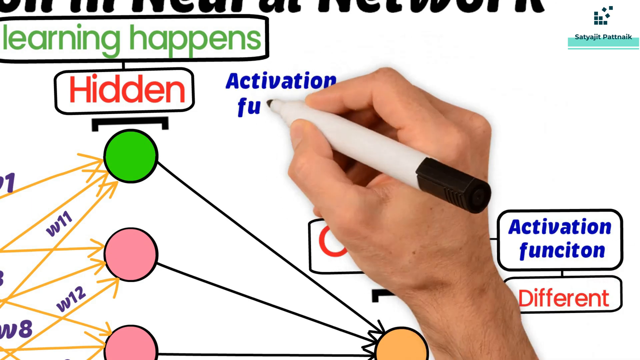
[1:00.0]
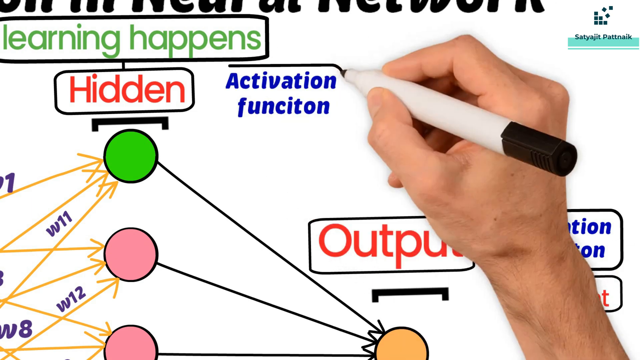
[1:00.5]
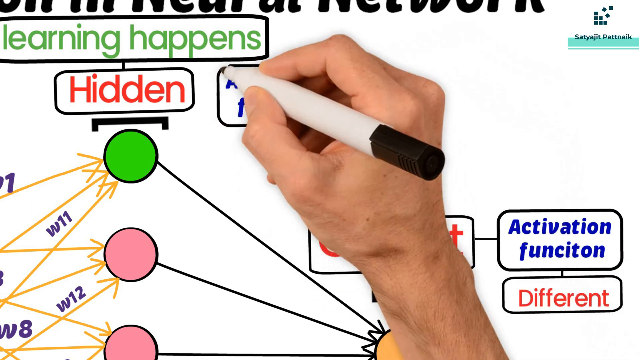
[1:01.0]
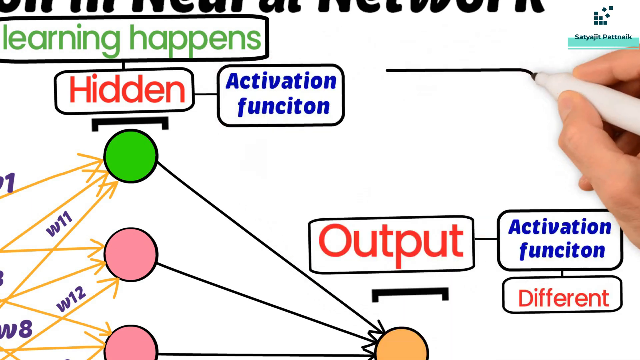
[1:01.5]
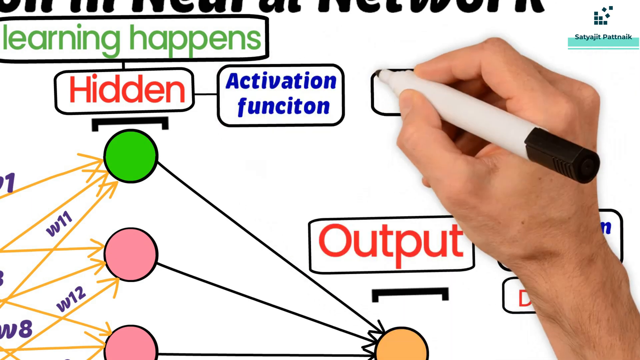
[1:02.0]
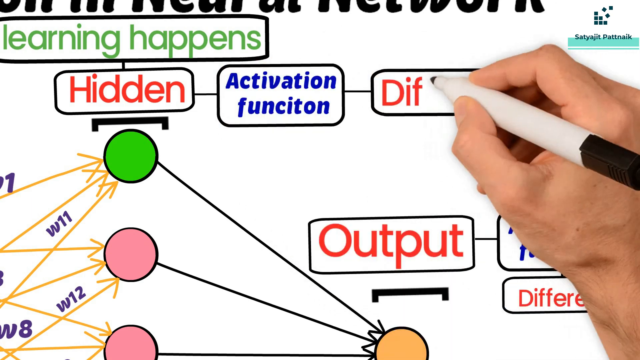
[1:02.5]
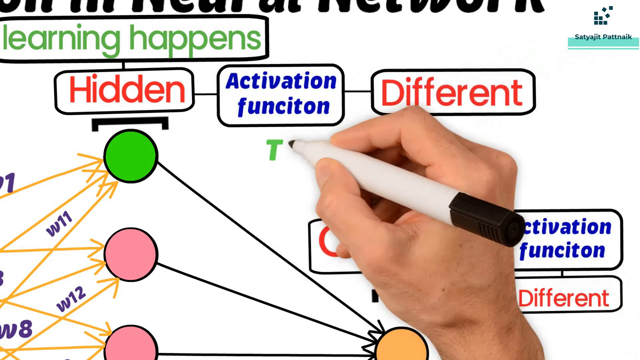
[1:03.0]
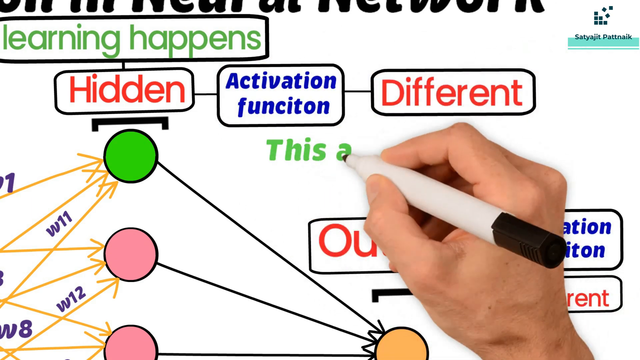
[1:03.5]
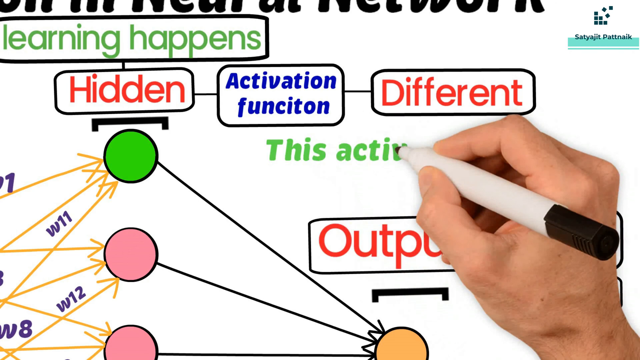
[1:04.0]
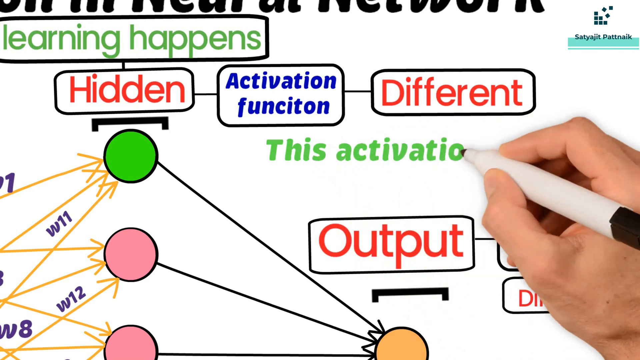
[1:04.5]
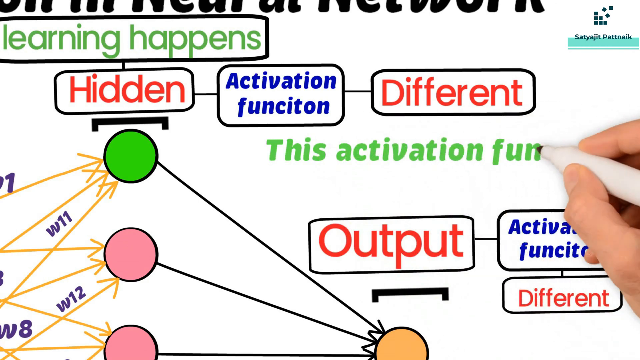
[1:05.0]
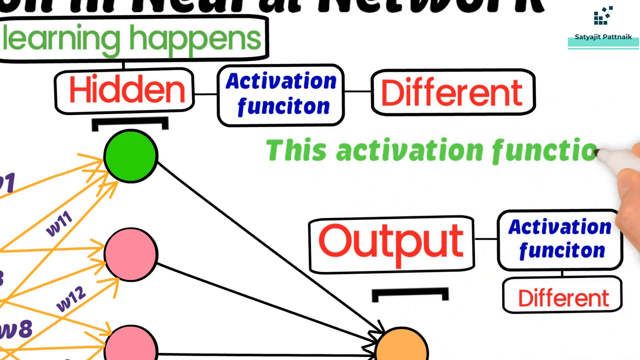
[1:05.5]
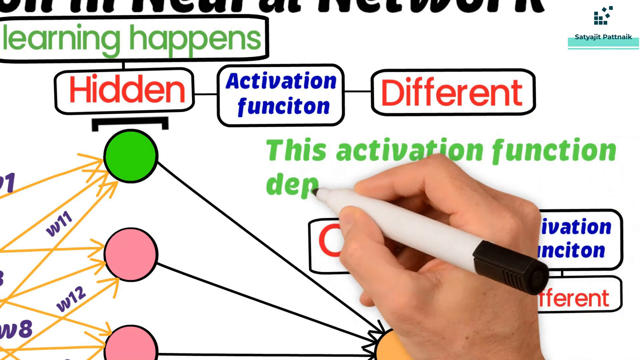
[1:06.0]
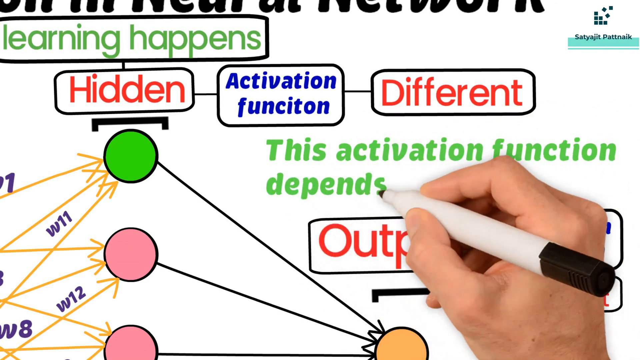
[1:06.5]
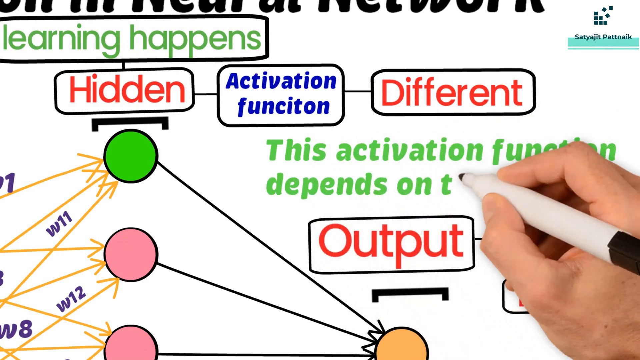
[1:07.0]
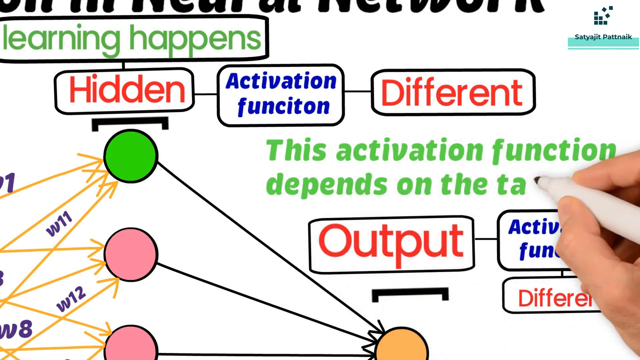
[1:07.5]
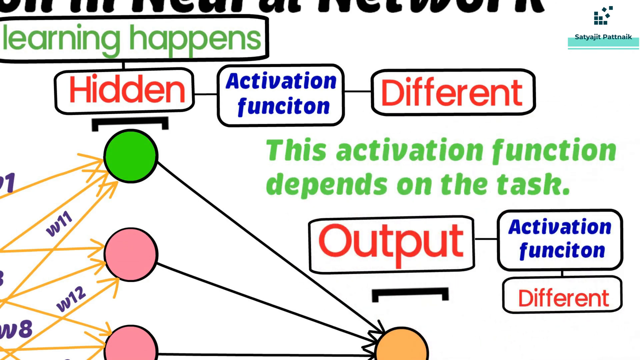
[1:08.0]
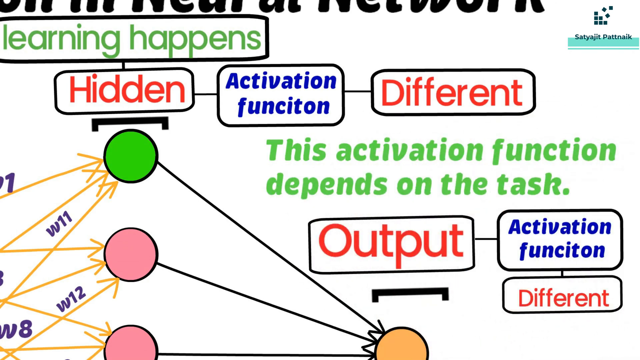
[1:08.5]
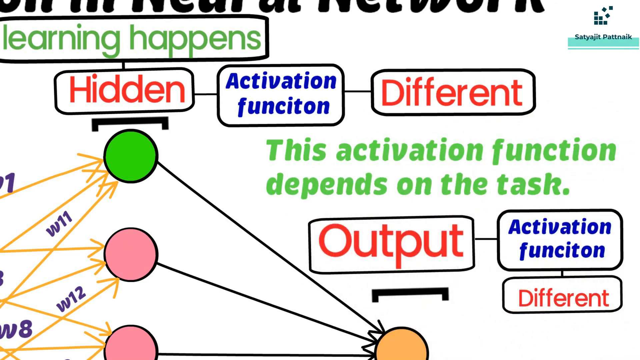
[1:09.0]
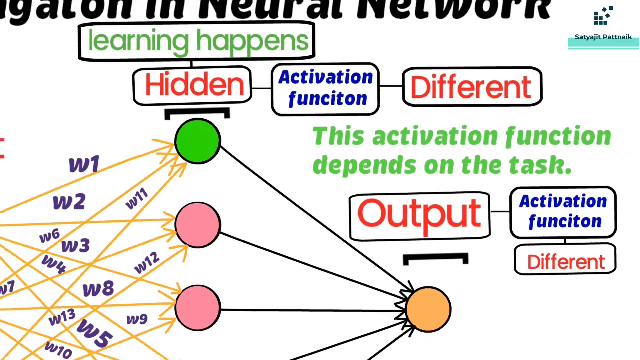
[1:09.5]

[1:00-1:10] More headings are added, some of them written in green, including one about different activation functions, along with an explanation reading "activation function depends on the task." The video zooms in to focus on part of these definitions, and after the green heading is written it zooms out to show the whole picture. The slogan or emblem remains in the top right.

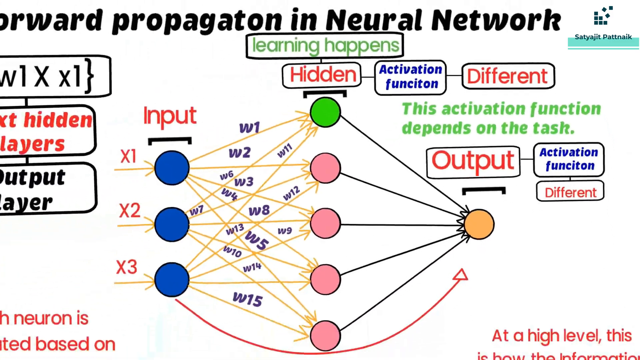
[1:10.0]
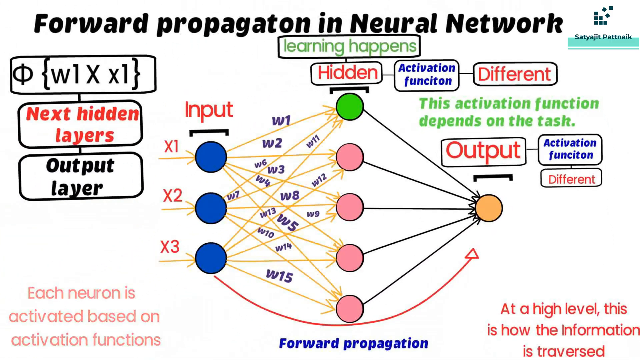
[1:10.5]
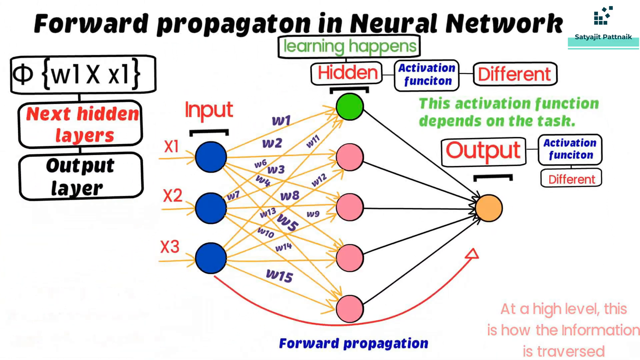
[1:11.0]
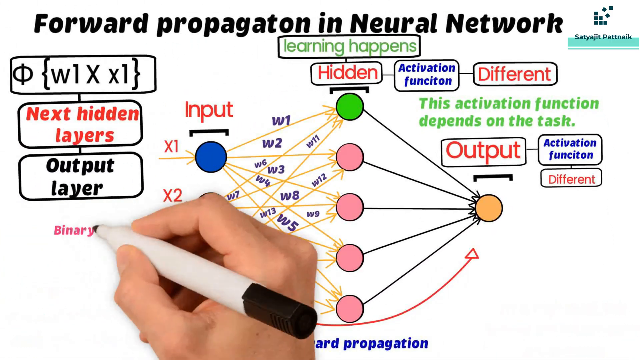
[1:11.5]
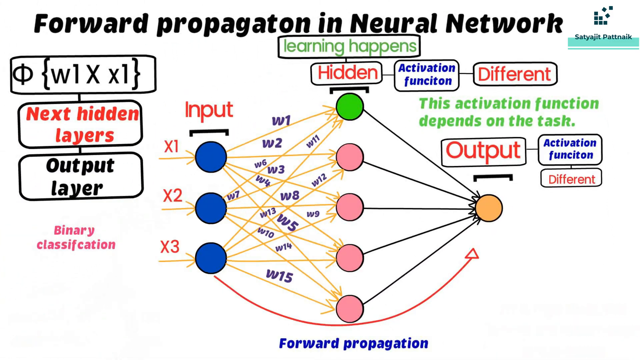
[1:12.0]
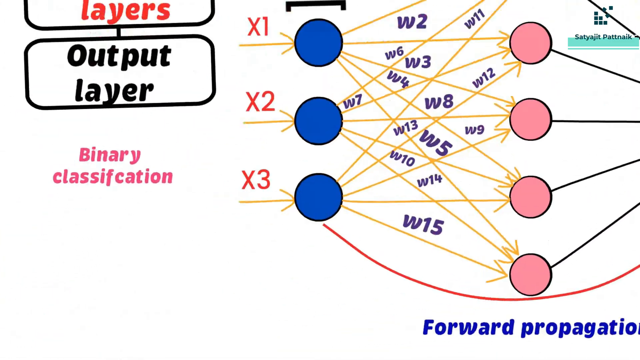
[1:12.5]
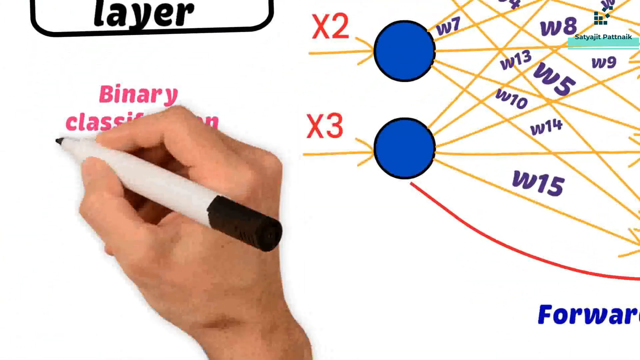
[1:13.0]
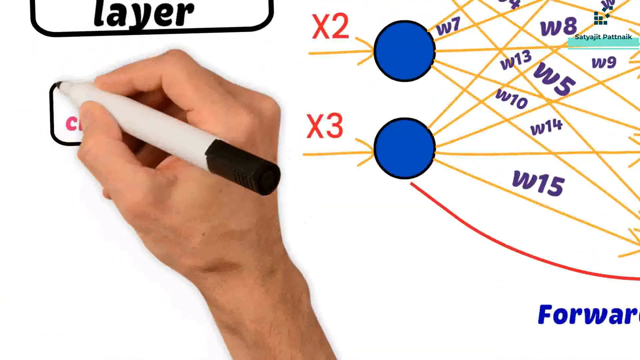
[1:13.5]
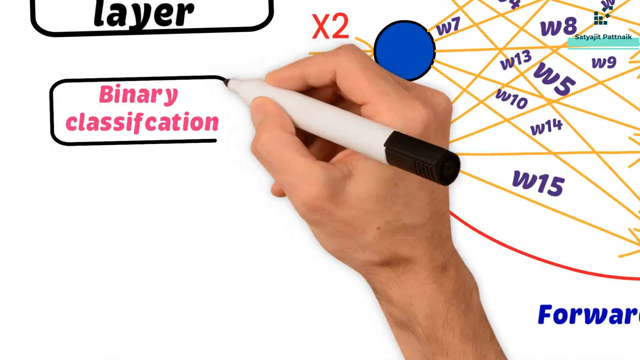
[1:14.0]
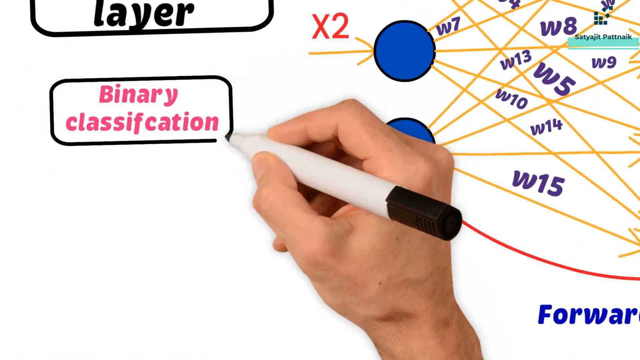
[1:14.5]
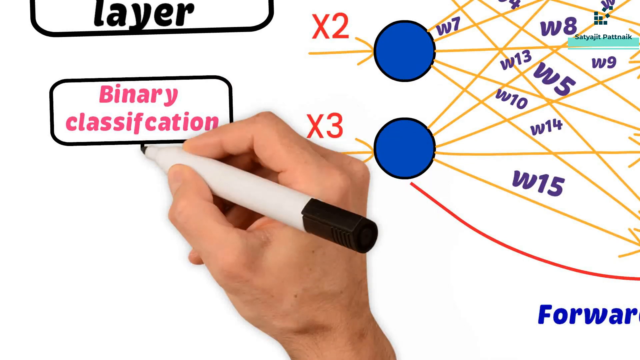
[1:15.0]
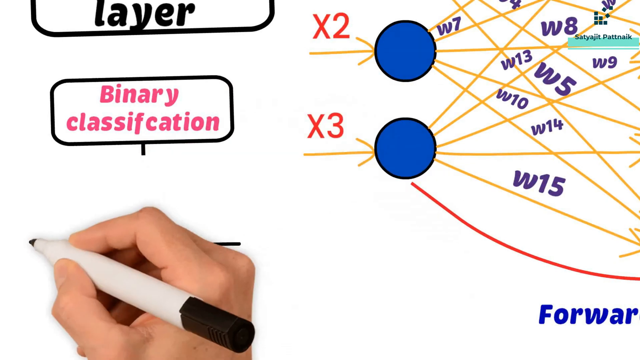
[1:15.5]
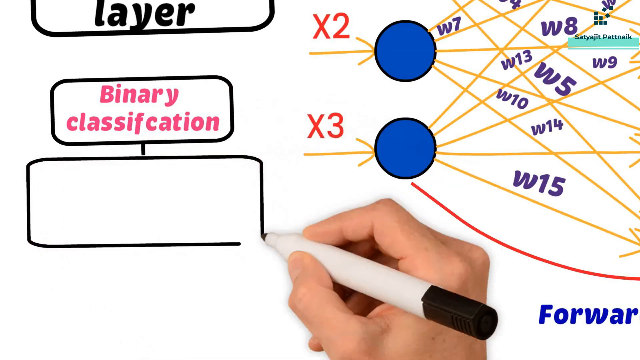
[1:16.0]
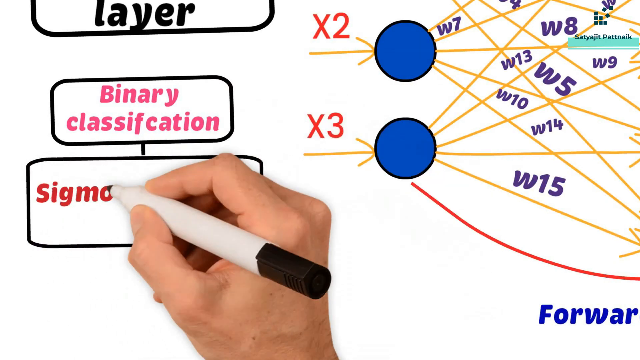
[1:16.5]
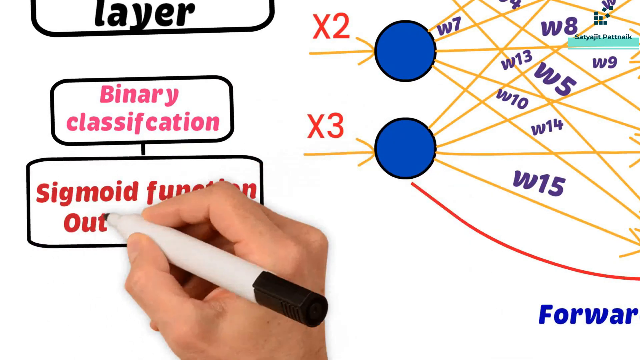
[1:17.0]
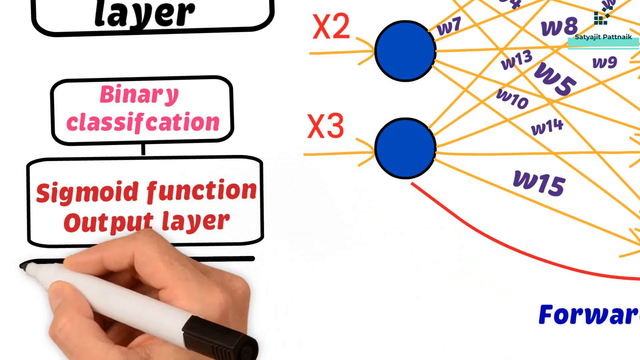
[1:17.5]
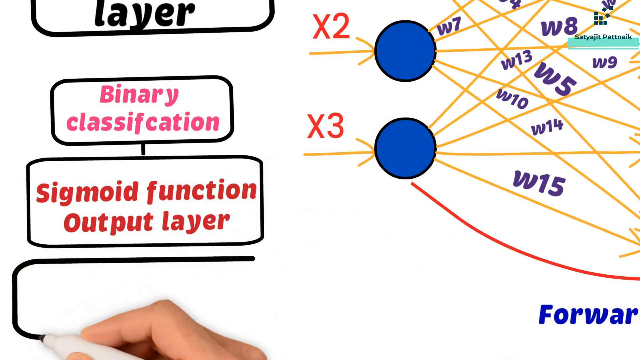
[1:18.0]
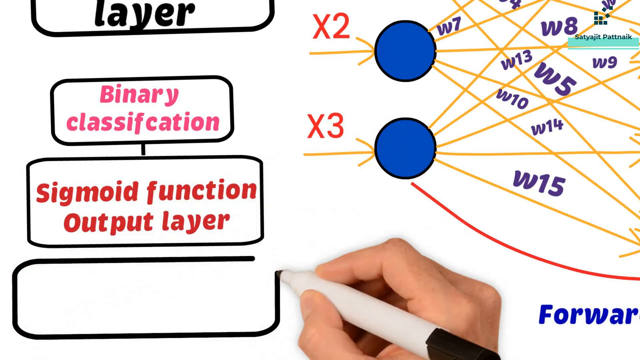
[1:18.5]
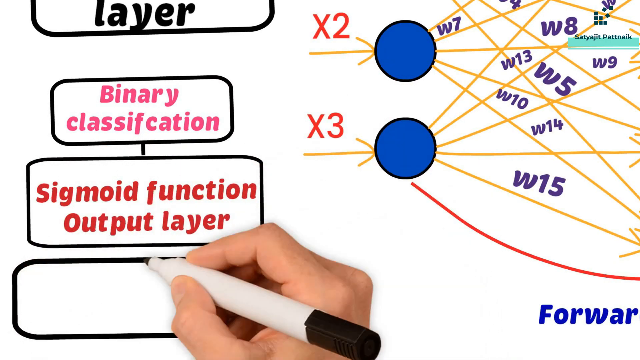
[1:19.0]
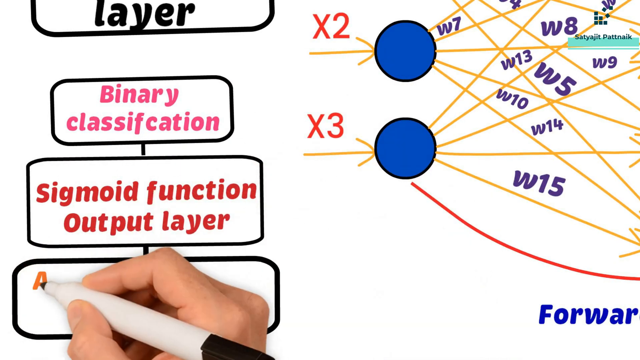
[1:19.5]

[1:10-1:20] The whole picture is visible at first, then the video zooms in to the bottom left, where the AI hand writes "binary classification," "sigmoid" and "sigmoid function output layer," each heading in its own box. After these three are written, the video zooms out to show all the information.